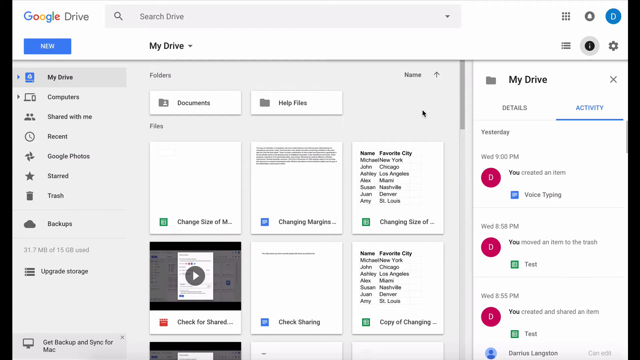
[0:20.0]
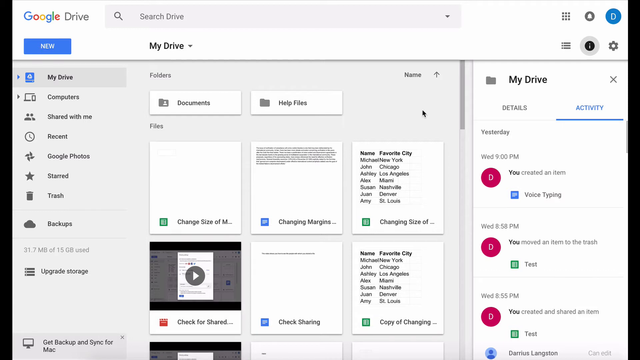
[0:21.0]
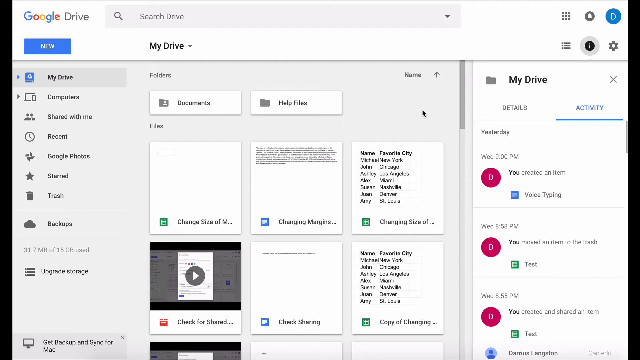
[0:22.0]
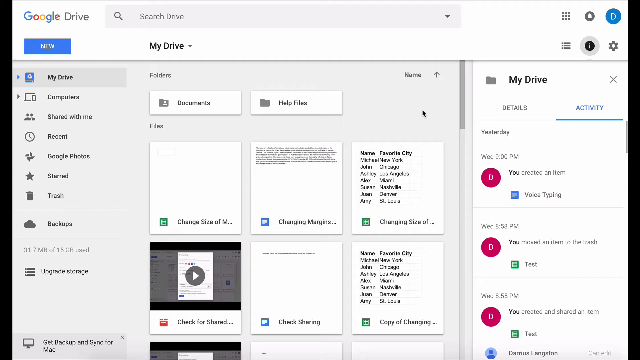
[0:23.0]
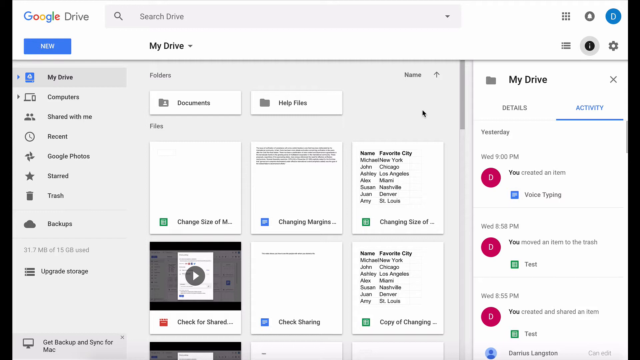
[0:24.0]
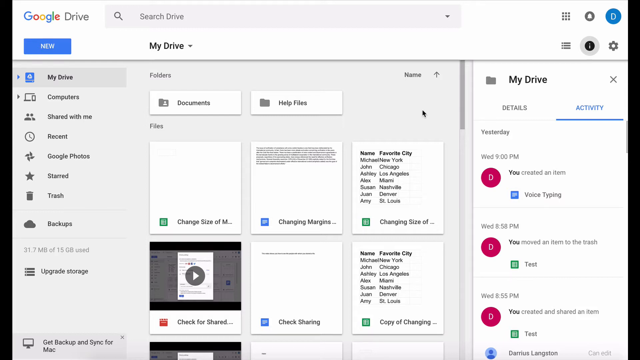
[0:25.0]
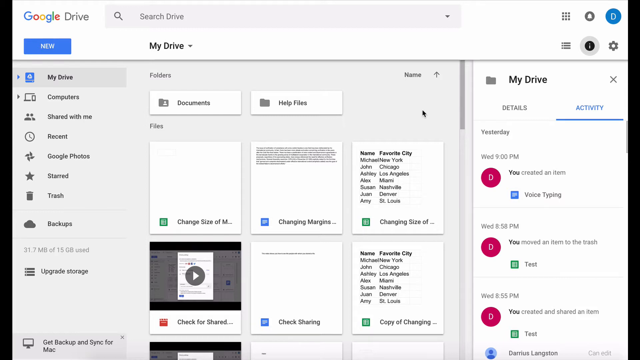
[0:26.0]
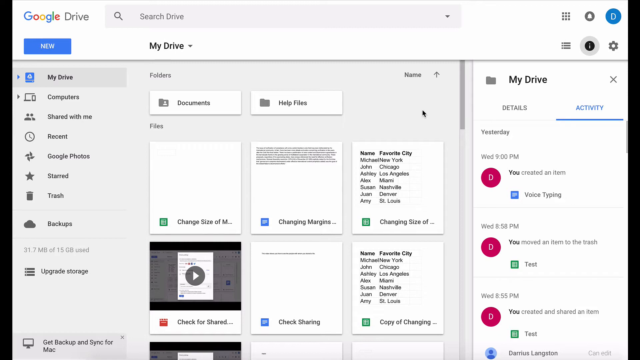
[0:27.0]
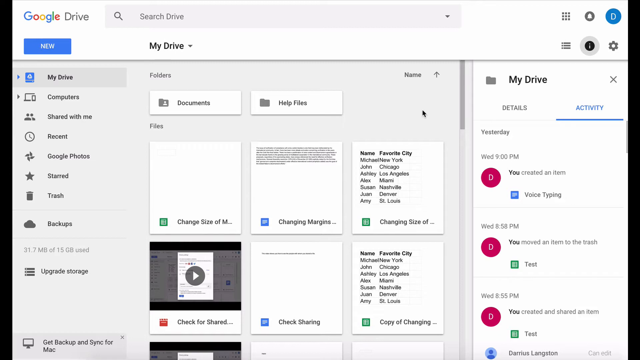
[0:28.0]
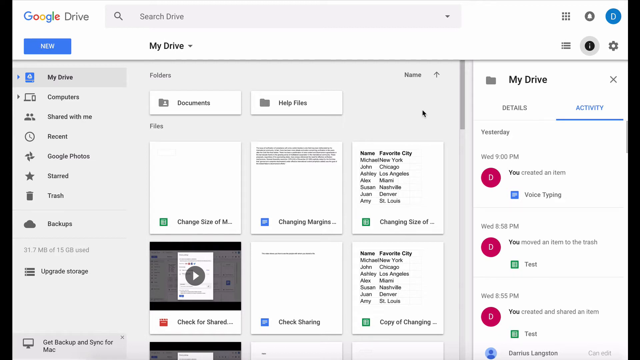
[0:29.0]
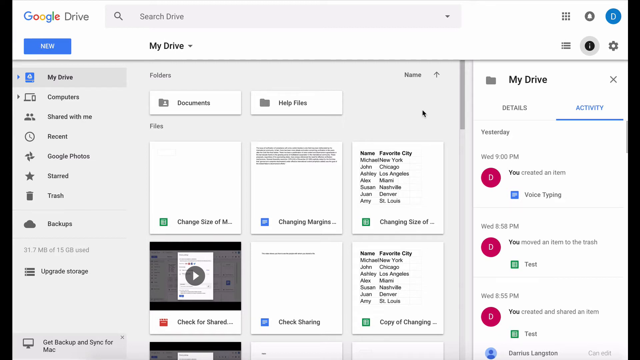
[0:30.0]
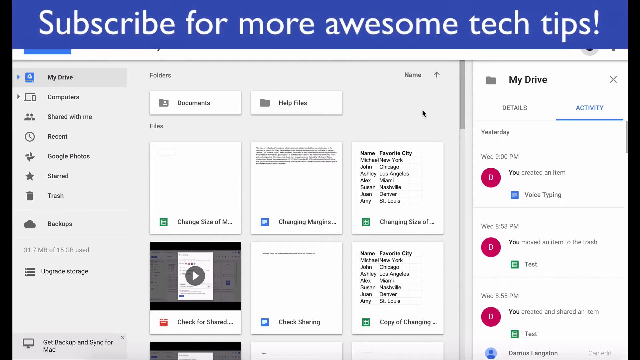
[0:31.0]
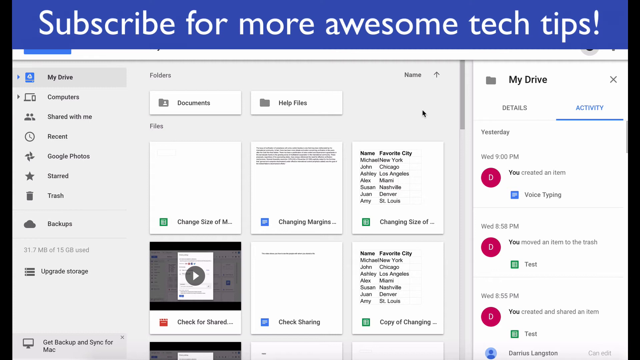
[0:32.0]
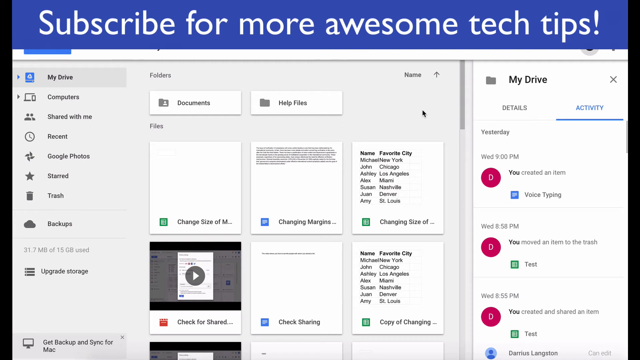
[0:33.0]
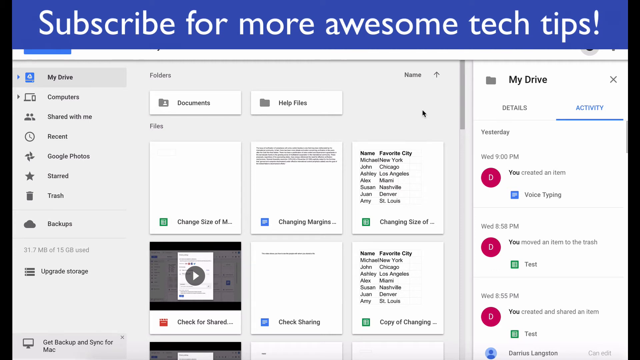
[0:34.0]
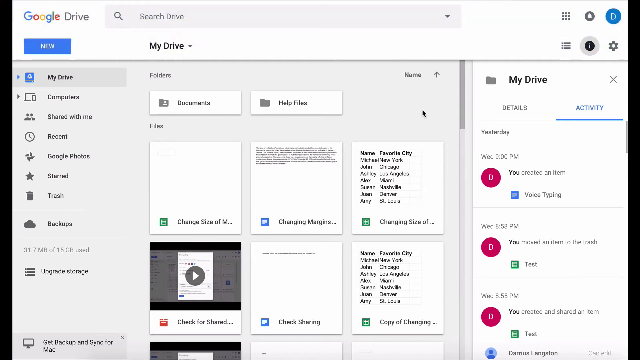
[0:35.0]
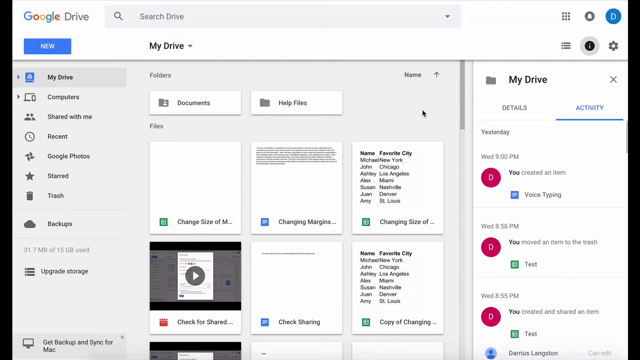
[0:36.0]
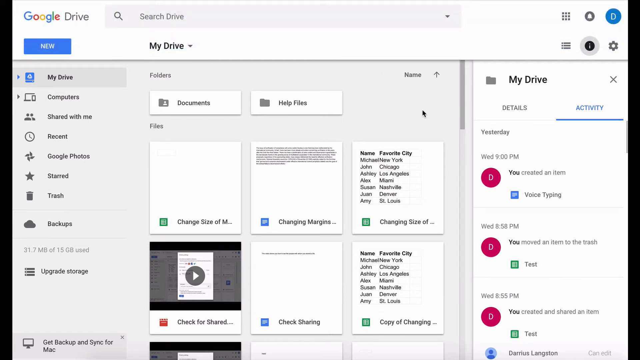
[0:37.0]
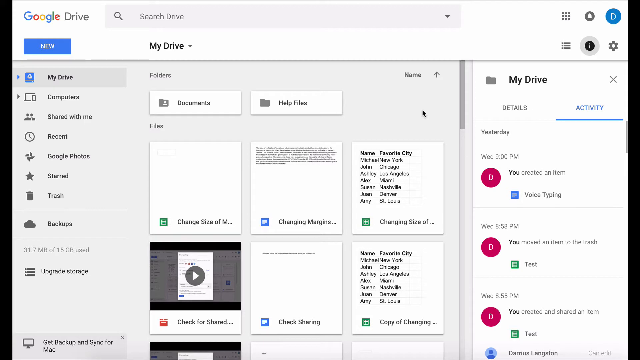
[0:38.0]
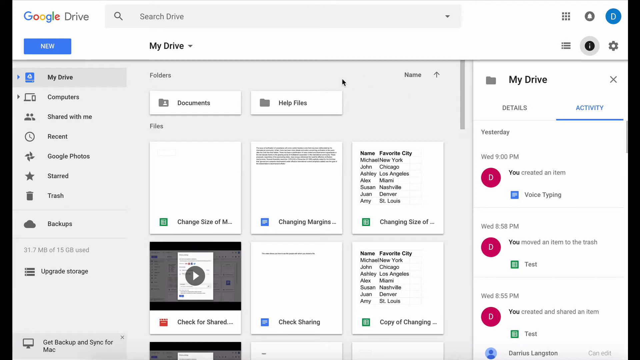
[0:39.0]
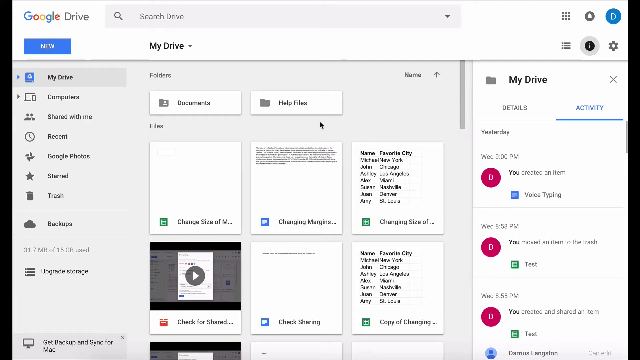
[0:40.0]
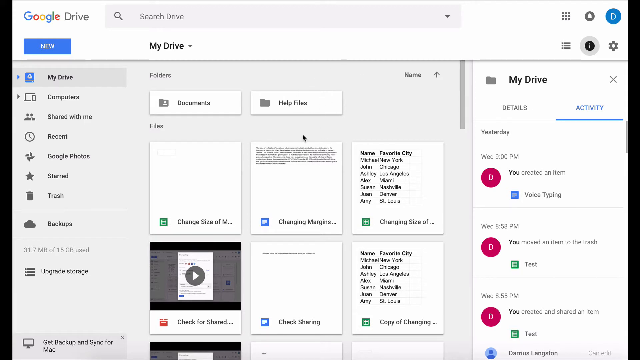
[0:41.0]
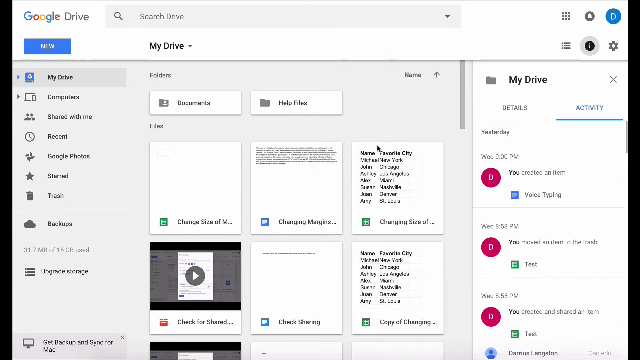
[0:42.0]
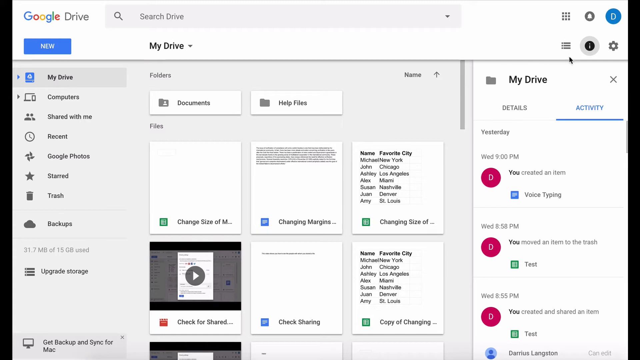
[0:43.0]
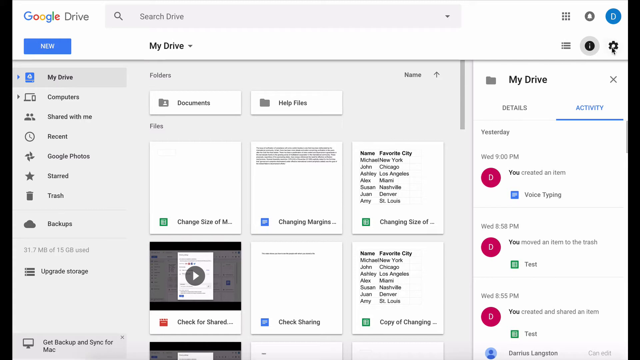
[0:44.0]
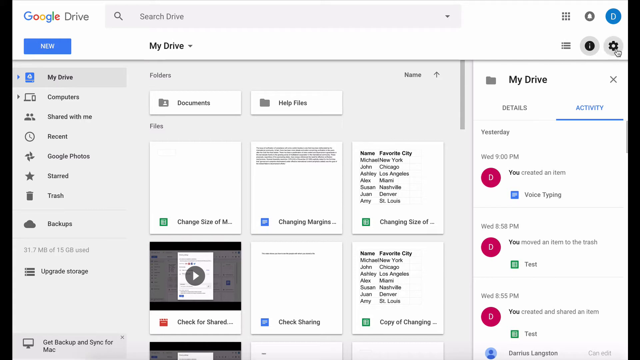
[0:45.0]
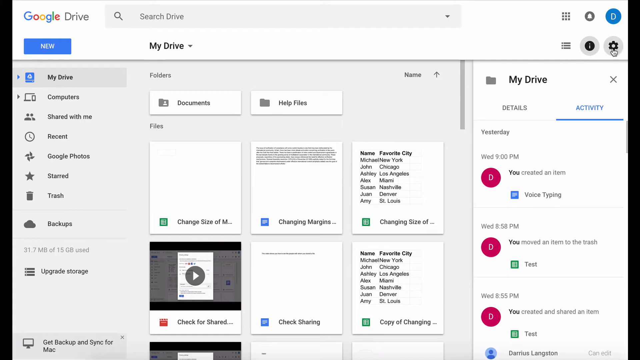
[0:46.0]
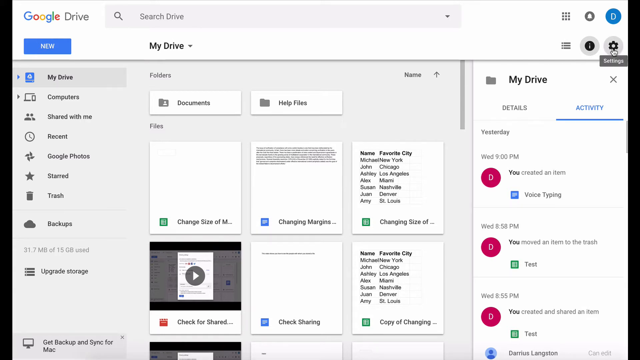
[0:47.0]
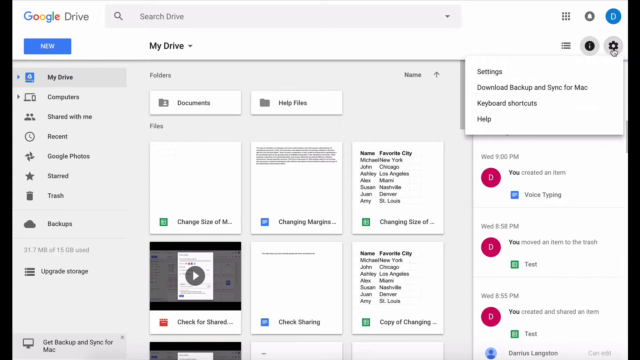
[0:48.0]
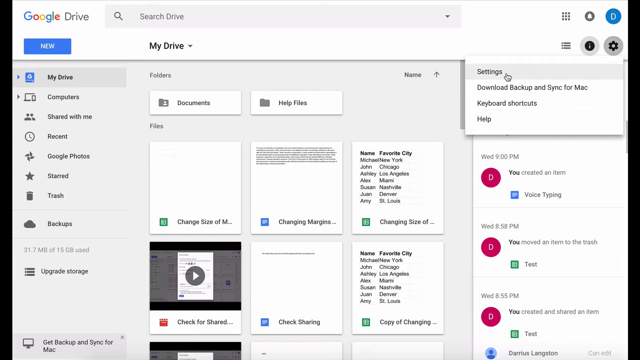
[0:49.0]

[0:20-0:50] A Google Drive page appears to be shown. A search bar at the top in the middle reads "Search drive". Below it is "New", and below that "My Drive", "Computers", "Shared with me", "Recent", "Google Photos", "Starred", "Trash" and "Backups", then "Upgrade storage" and "31.7 megabyte of 15 gigabyte". In the middle of the screen are "Documents", "Help files", an item beginning "Change size of M", and "Change margins", along with "Favorite city" and the list Michael, New York; John, Chicago; Ashley, Los Angeles; Alex, Miami; Susan, Nashville; Juan, Denver; Amy, St. Louis. To the right is "My Drive" with "Details" and "Activity" below it. Under Activity are "Yesterday", "Wednesday at 9 p.m., you created an item", then "Voice typing", then "you moved an item to the trash", then "Test". At the top right is a circle icon with the letter D in it, which probably stands for the user.